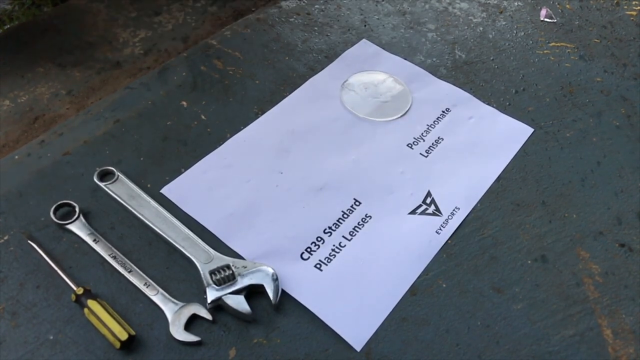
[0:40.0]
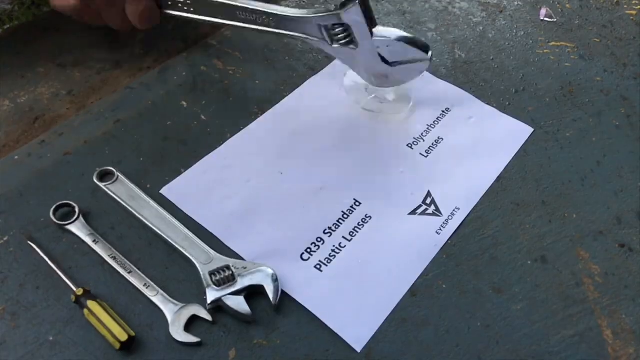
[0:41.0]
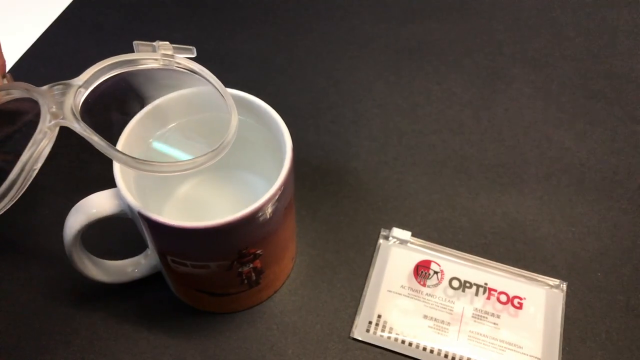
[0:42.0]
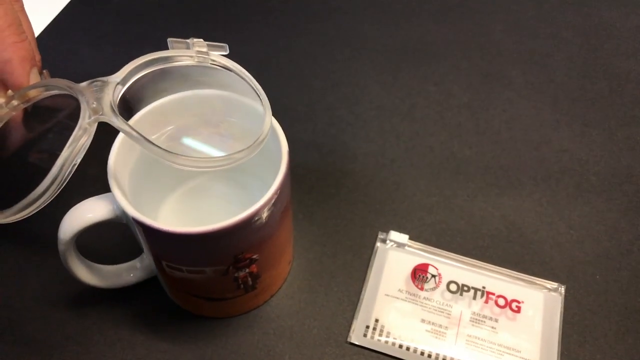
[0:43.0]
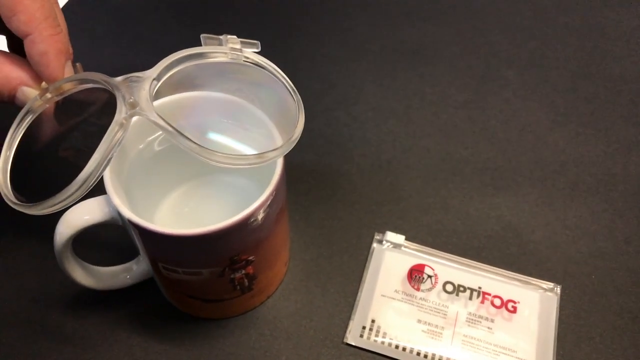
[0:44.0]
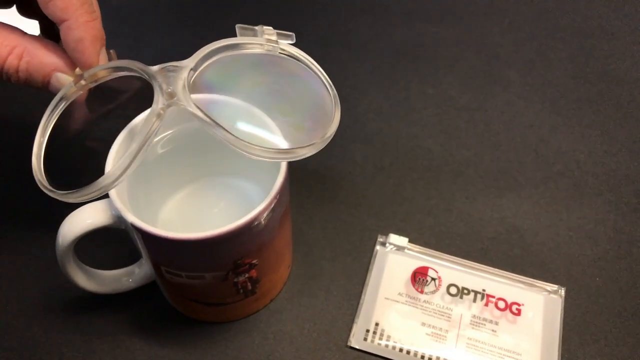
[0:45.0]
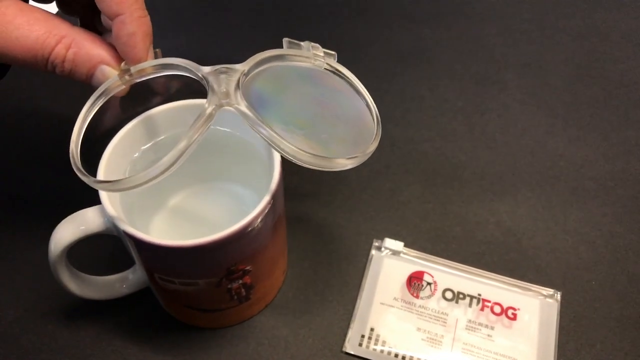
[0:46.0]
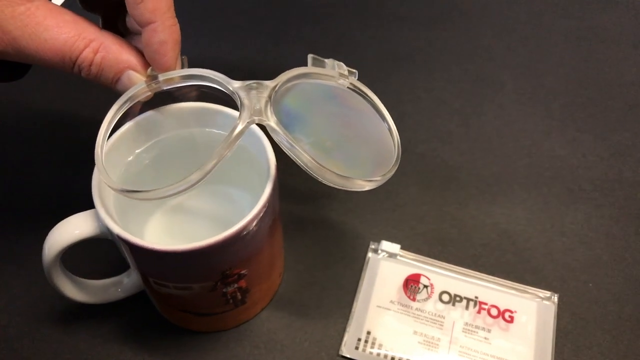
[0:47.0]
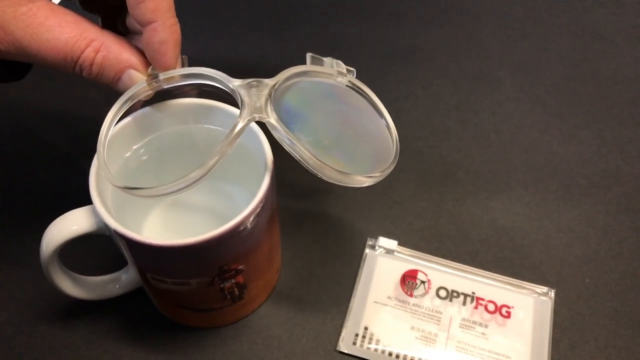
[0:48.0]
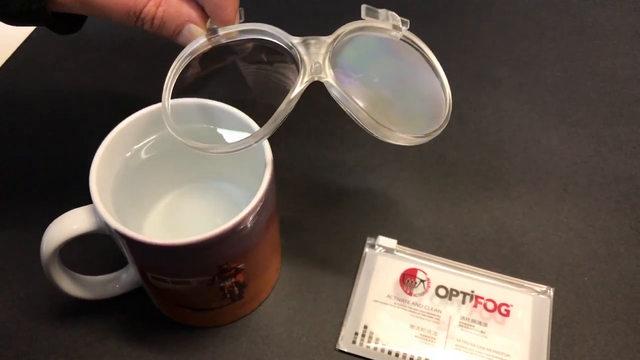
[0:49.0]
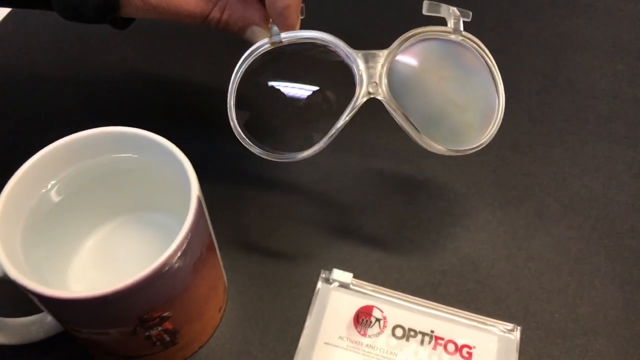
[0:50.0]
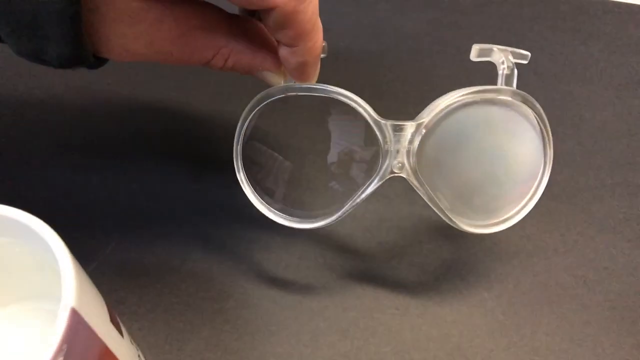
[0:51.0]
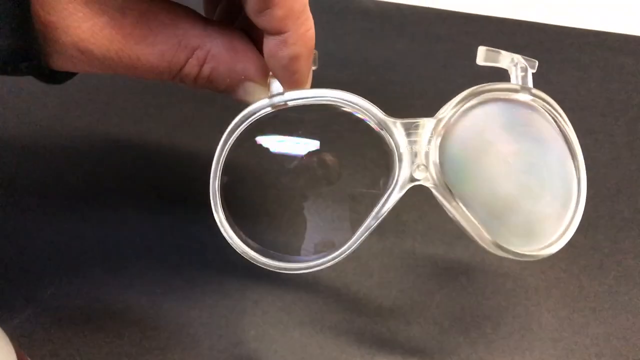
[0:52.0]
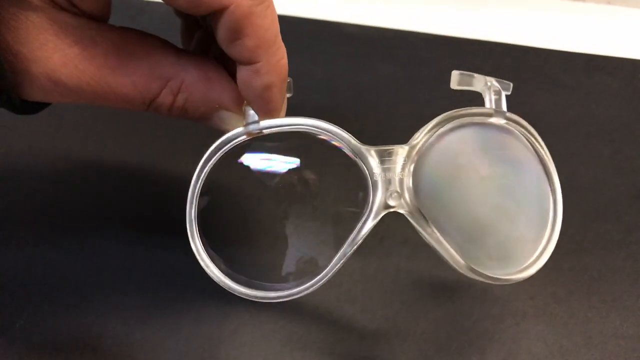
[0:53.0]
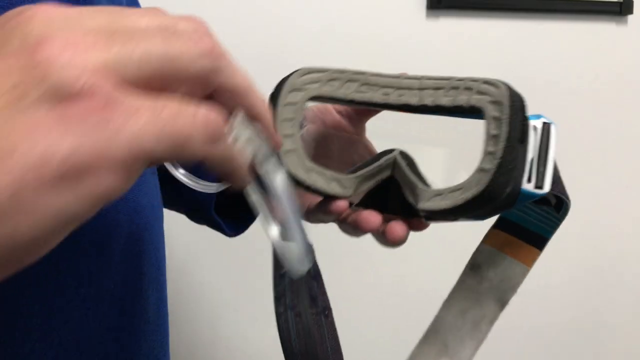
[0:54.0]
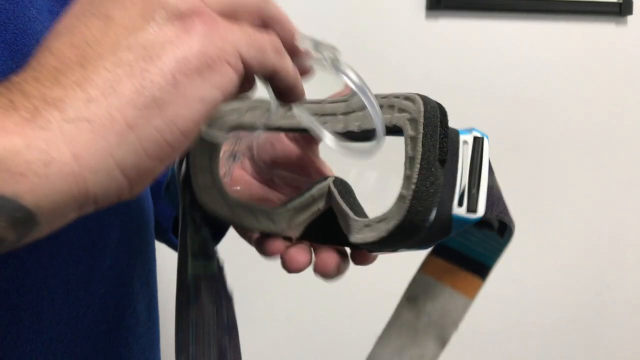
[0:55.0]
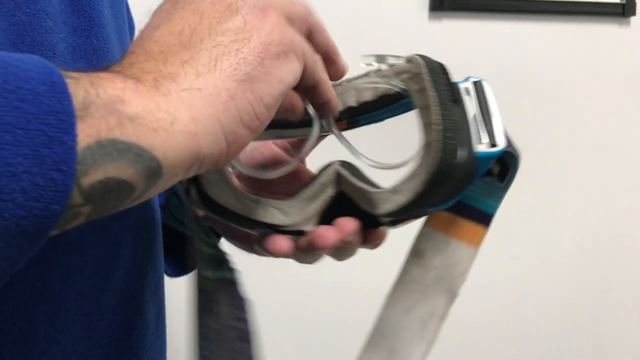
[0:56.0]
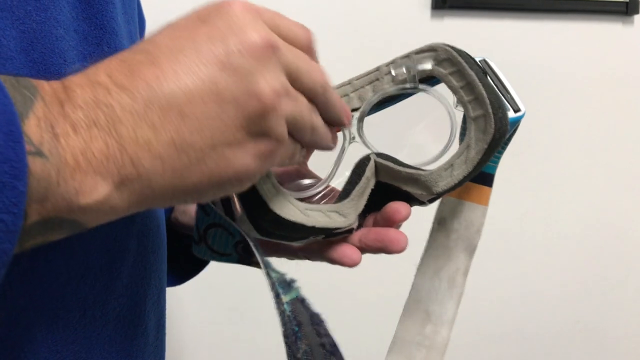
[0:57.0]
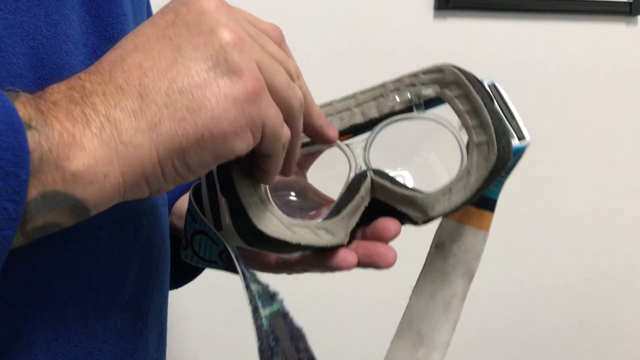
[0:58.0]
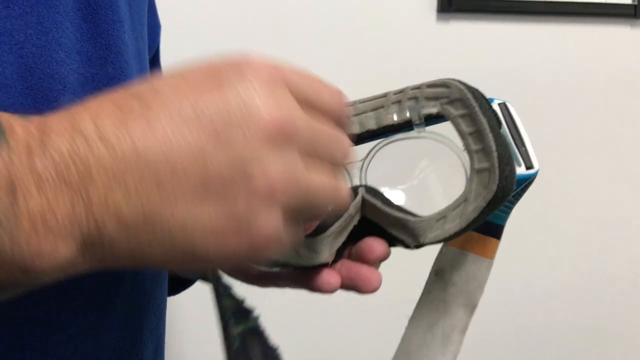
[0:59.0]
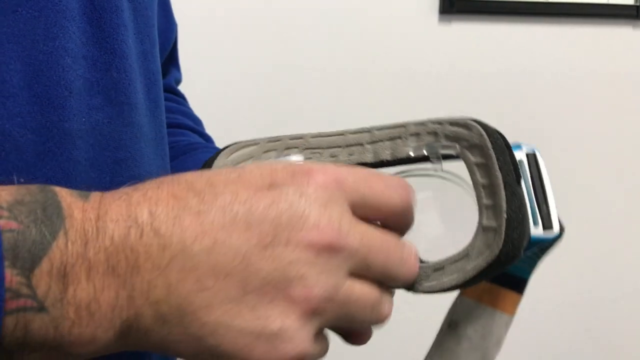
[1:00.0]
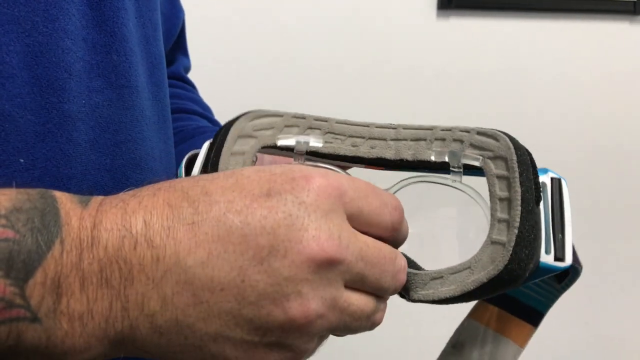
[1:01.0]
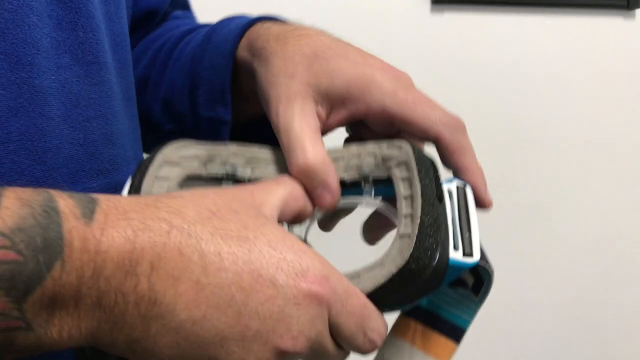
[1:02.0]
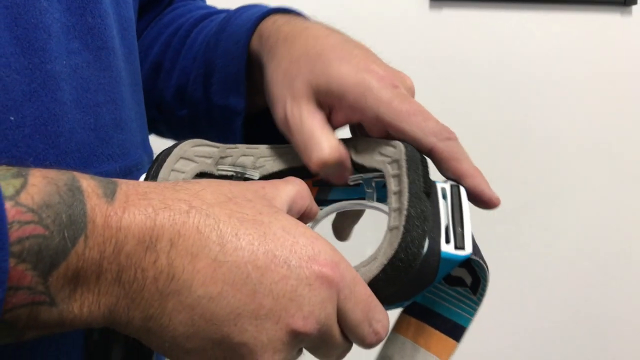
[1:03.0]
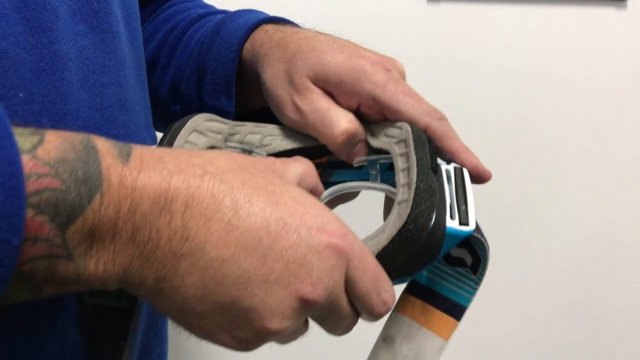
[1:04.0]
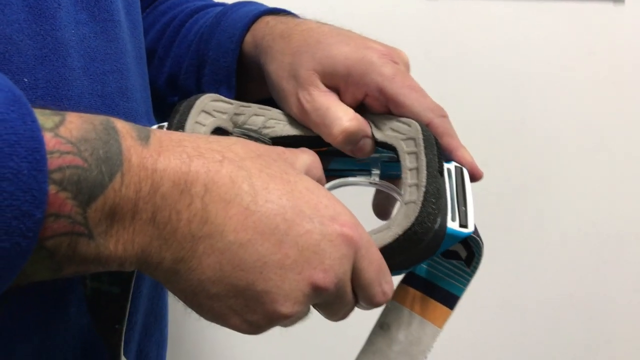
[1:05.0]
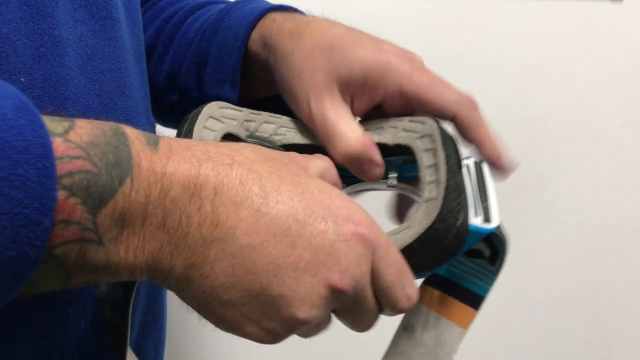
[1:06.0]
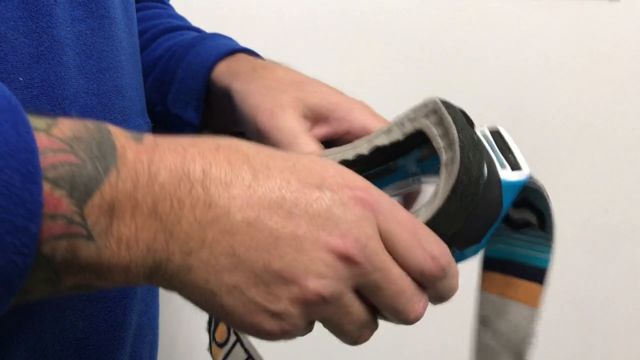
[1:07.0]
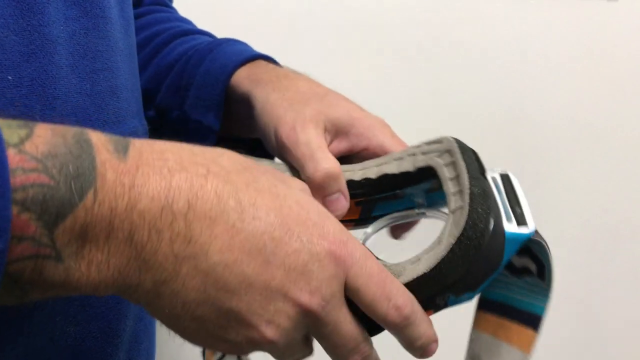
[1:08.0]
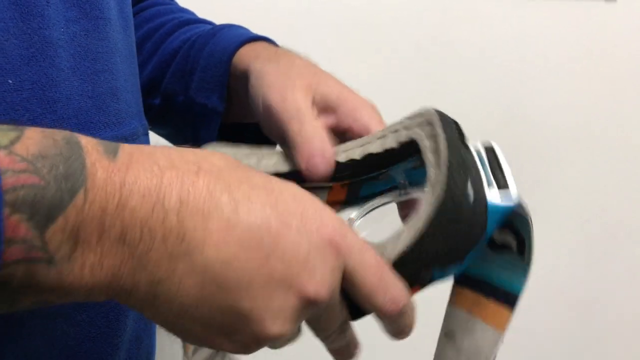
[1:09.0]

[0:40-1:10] A mug and one of their pairs of lenses are shown to demonstrate fog resistance: one lens is fully fogged over from the steam of a hot mug while the other is completely clear. Only the hands of the person doing this are in view, and they have painted nails. The lenses are then shown fitting into different types of goggles, maybe ski goggles or dirt bike goggles, or being fitted to a specific headband device or other sporting gear. A person wearing blue with tattoos, whose hands are the only part visible, puts the lenses into skiing or snowboarding-type goggles.